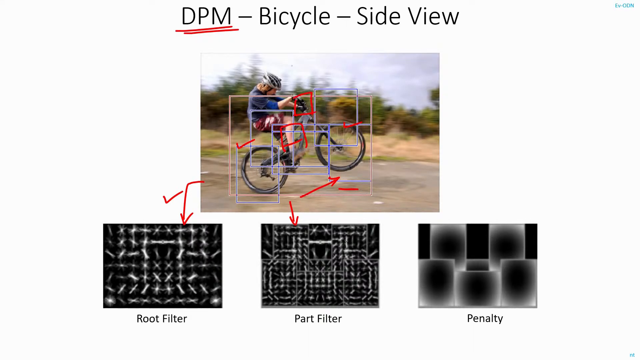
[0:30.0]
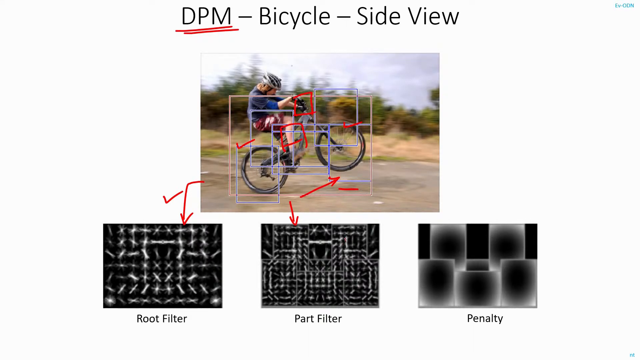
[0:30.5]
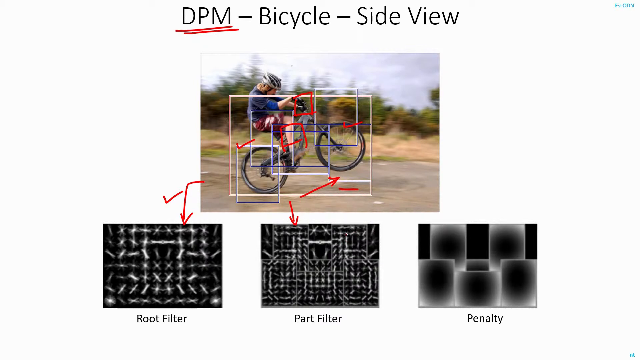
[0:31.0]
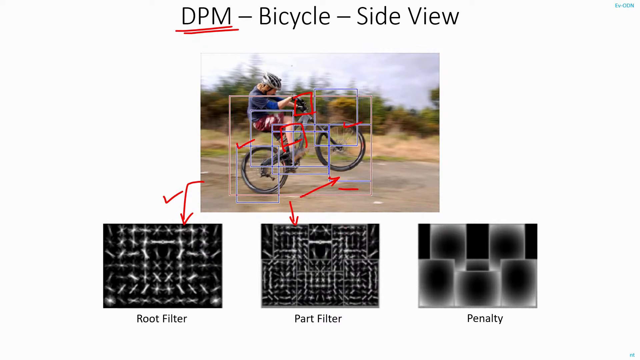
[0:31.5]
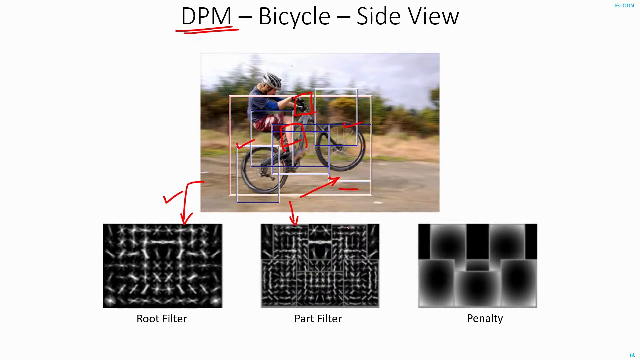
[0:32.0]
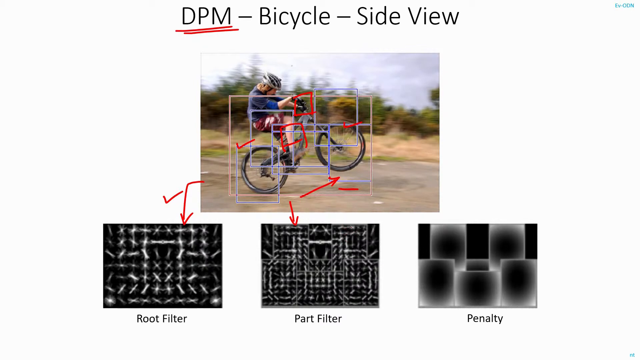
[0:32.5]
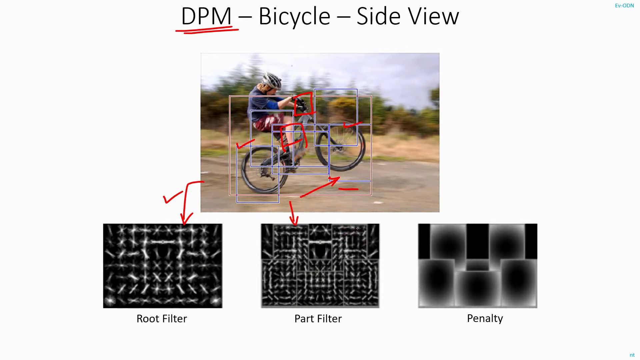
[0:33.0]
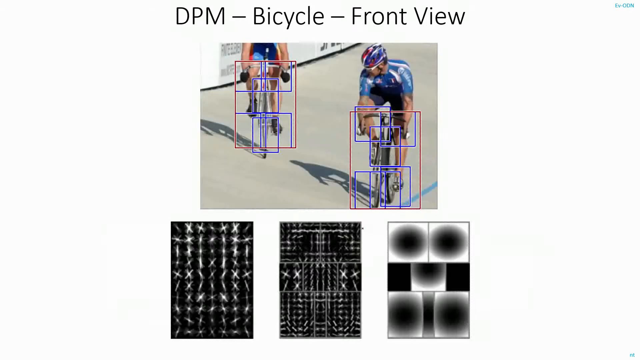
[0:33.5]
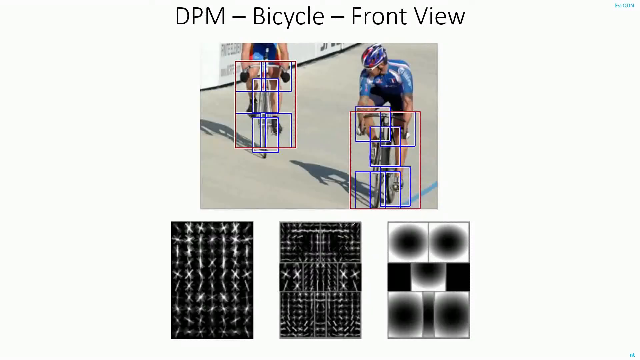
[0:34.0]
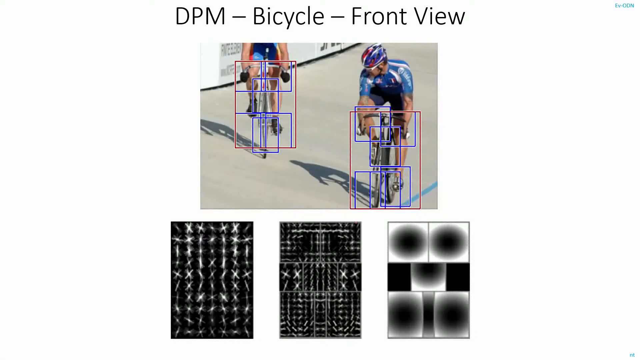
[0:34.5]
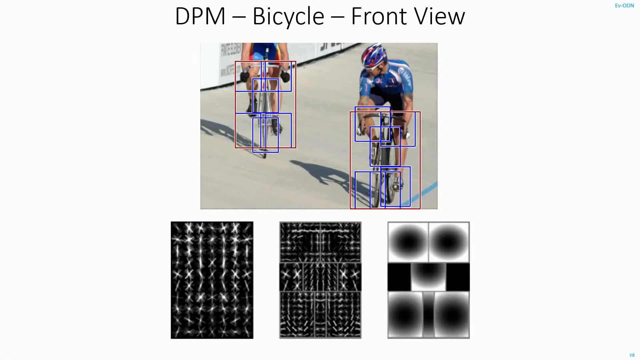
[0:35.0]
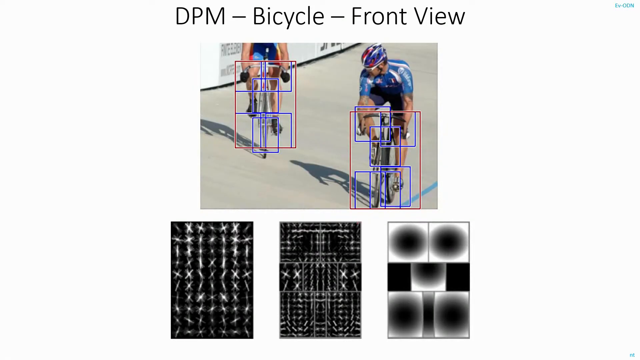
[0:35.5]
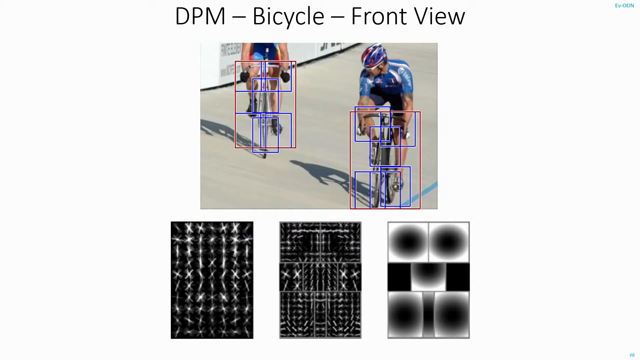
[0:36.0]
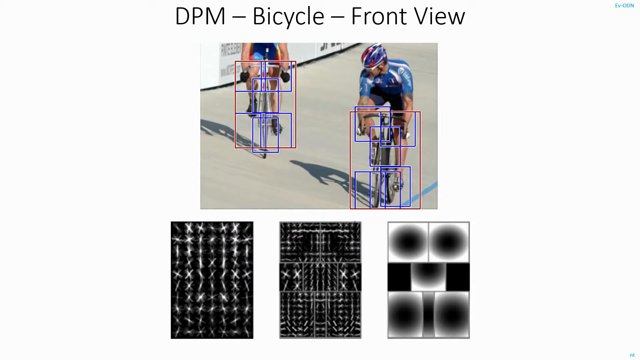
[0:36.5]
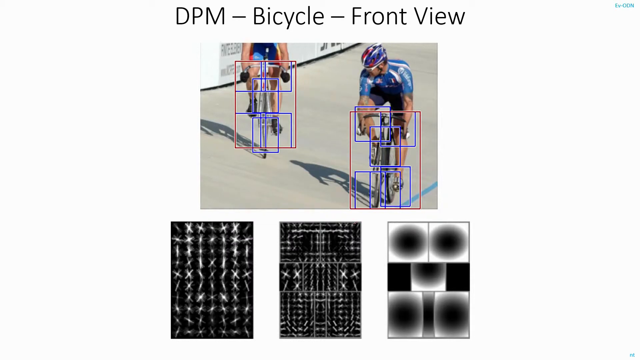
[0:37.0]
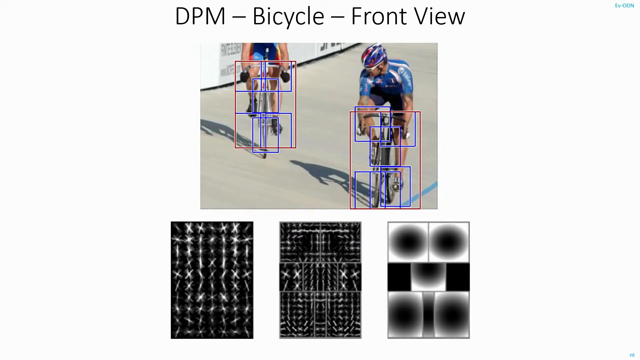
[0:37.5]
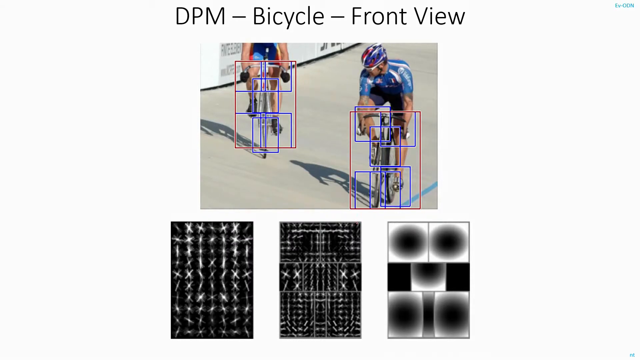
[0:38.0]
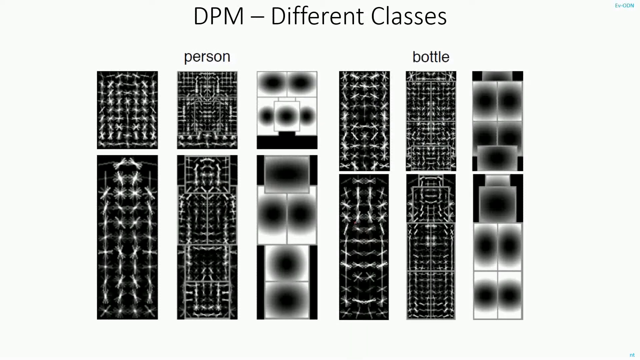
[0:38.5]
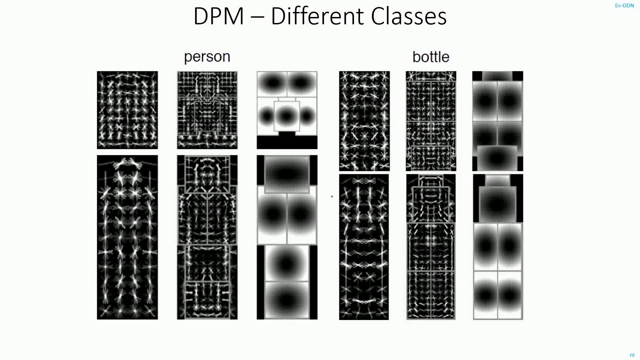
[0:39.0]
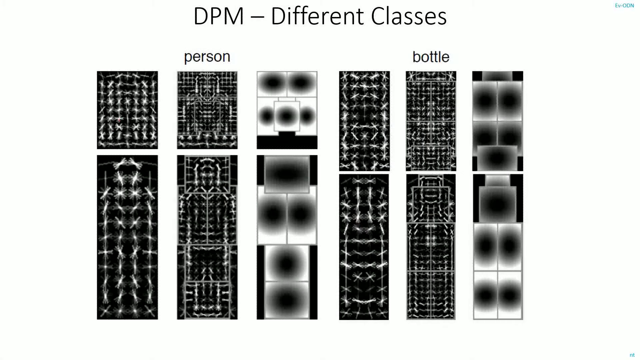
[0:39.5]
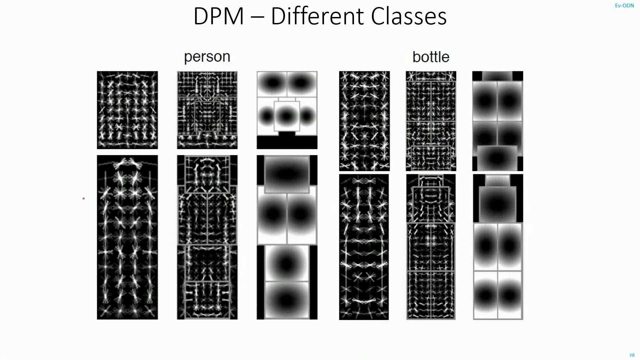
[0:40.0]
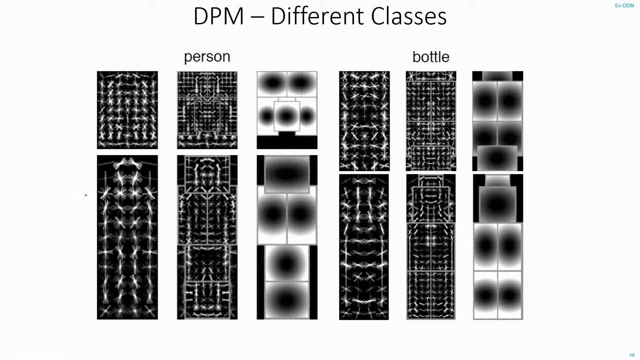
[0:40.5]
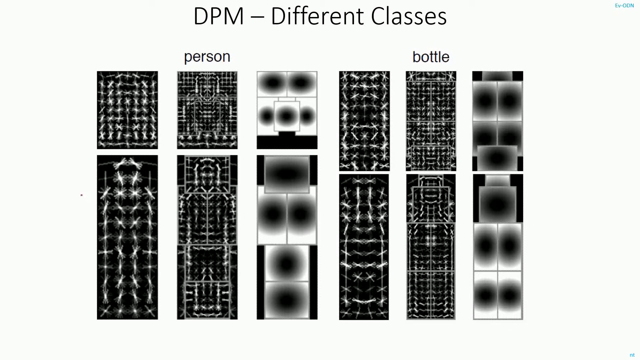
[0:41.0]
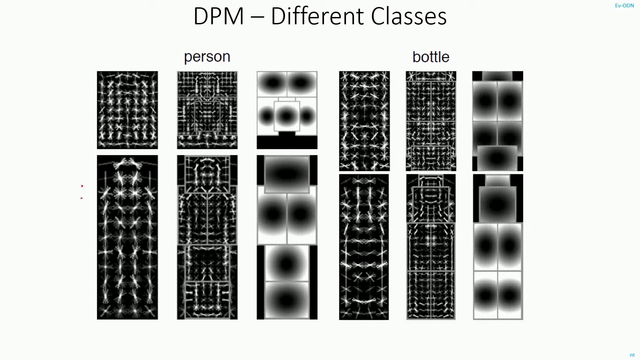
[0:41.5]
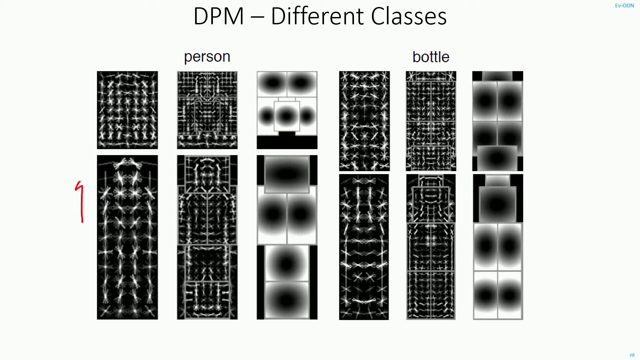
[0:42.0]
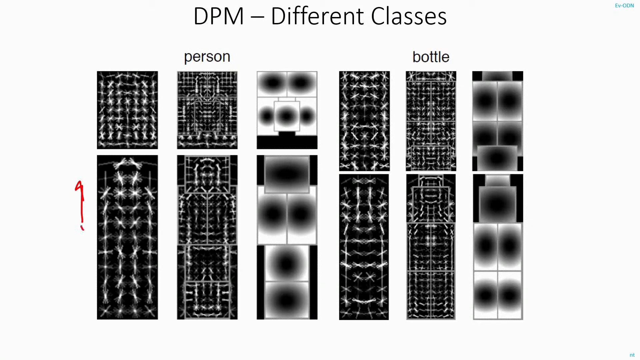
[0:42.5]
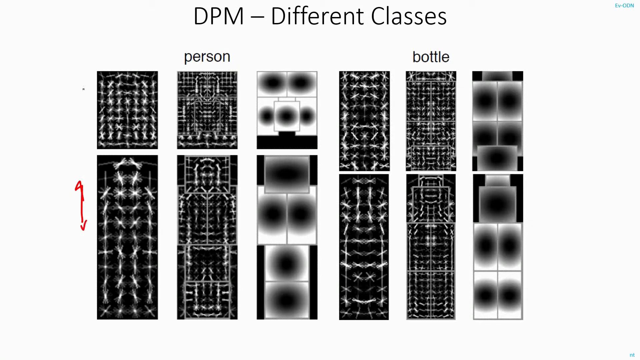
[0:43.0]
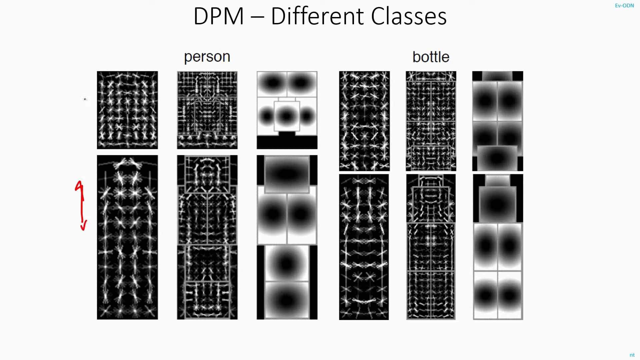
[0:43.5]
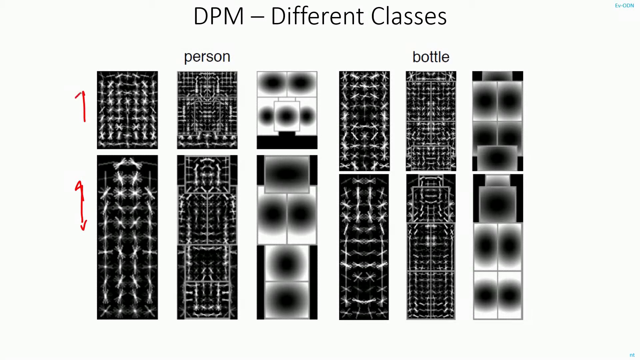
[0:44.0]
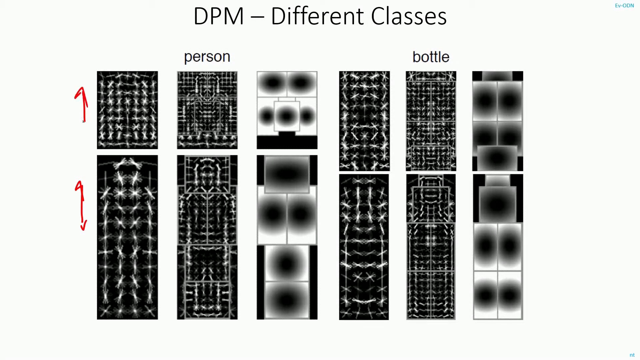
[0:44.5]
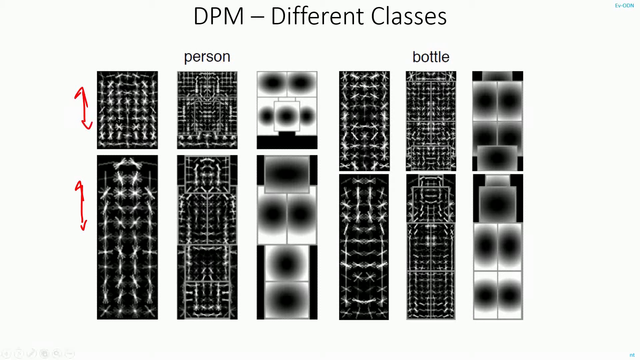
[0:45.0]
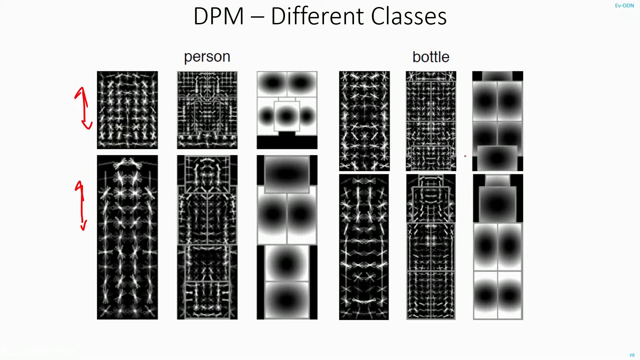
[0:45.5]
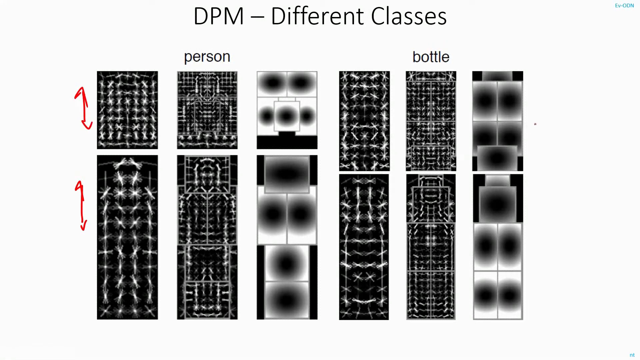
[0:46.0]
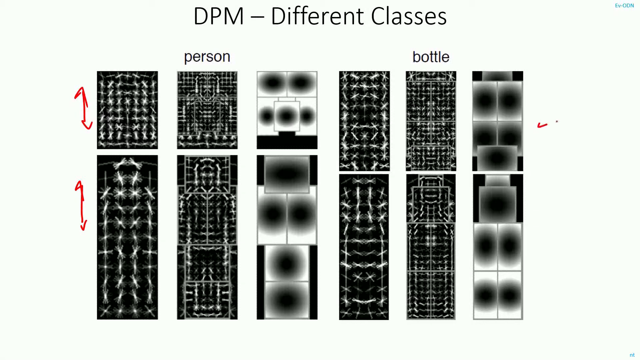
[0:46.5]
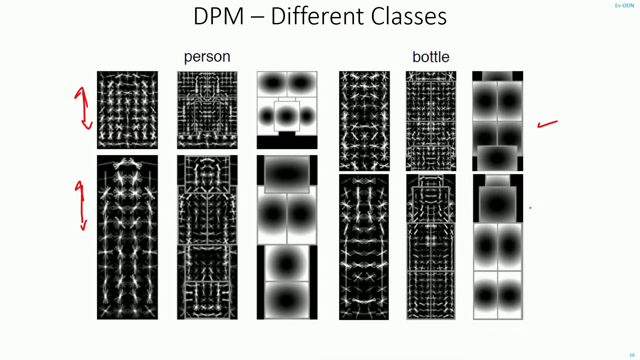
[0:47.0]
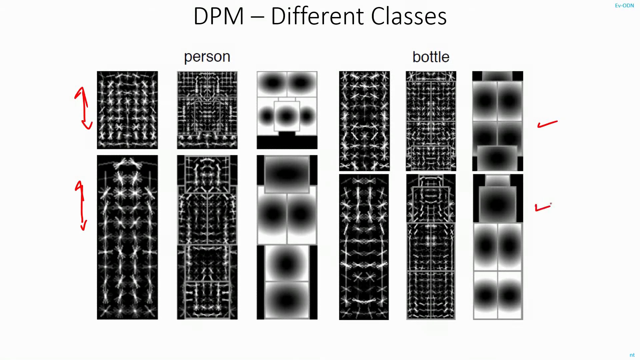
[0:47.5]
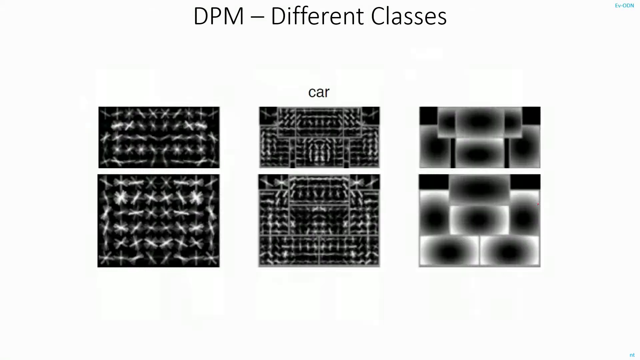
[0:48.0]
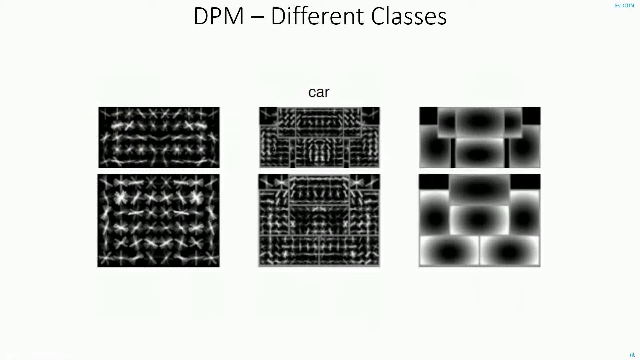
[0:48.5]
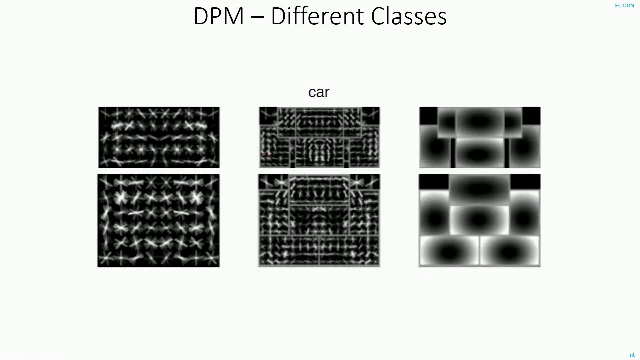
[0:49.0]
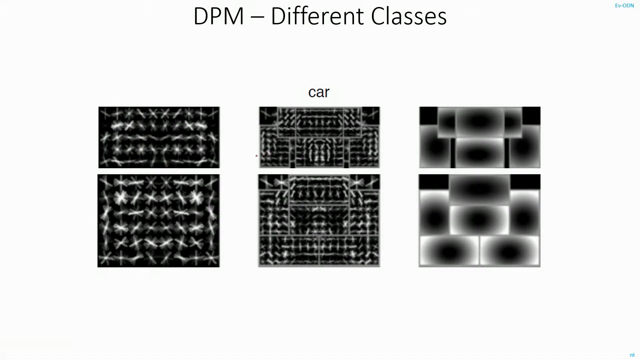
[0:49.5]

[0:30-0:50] A still image shows a kid on a bicycle doing a wheelie, with three black, white and gray rectangles underneath. It quickly switches to a slide with an image of two people bicycling, dressed in bicycle clothes as if they are professional cyclists, with "DPM Bicycle Front View" written above. Many squares and rectangles are placed all over both of their bicycles, as if marking different areas of the bikes, and below are three black, white and gray rectangles showing various patterns. The screen then switches to a new slide titled "DPM Different Classes", with many rectangles of various sizes and patterns. The first three rows have the word "Person" above them, and the next group of three has the word "Bottle" above it. Red marks appear as if someone is drawing on the slide; it looks like up arrows are drawn on the far left, and then a red check mark on the far right.